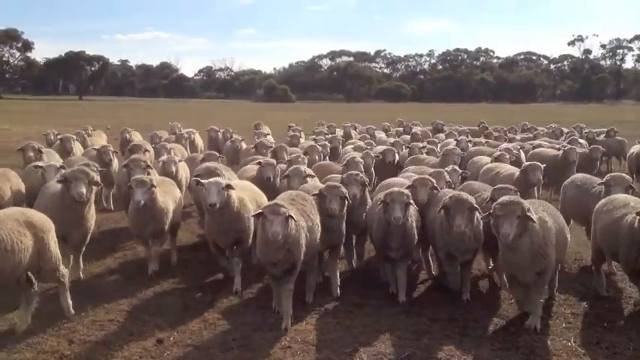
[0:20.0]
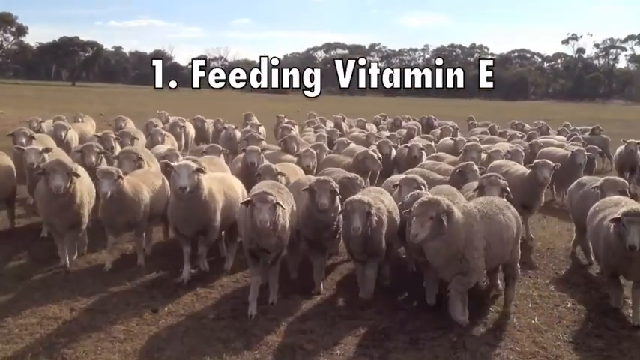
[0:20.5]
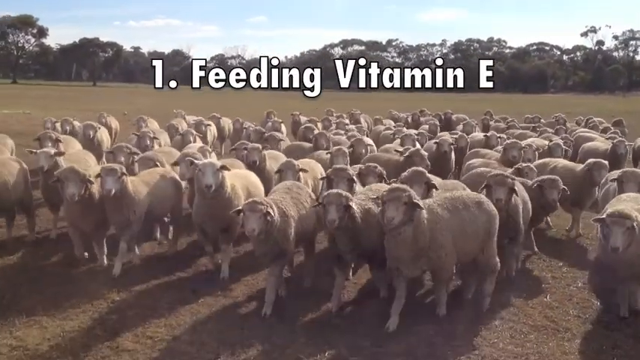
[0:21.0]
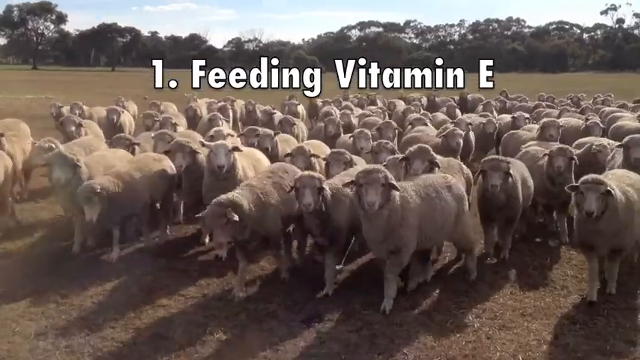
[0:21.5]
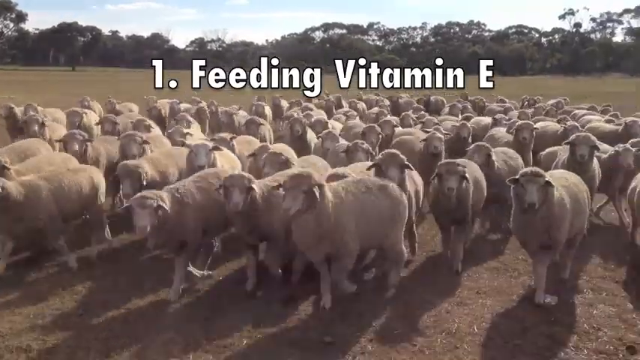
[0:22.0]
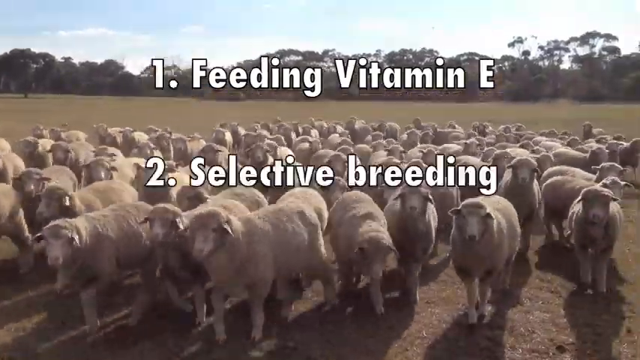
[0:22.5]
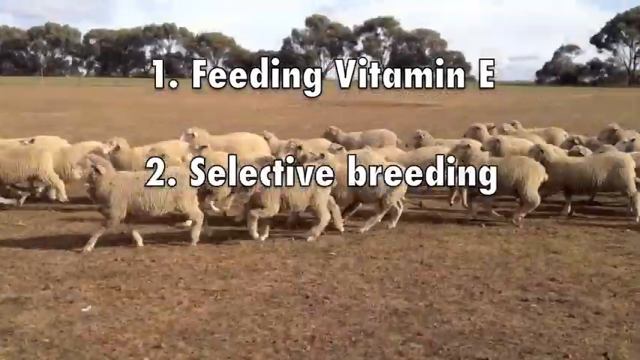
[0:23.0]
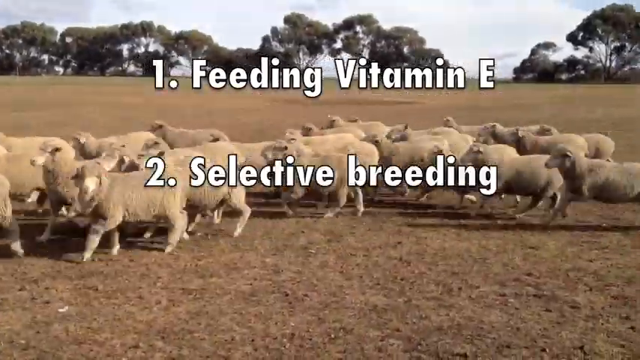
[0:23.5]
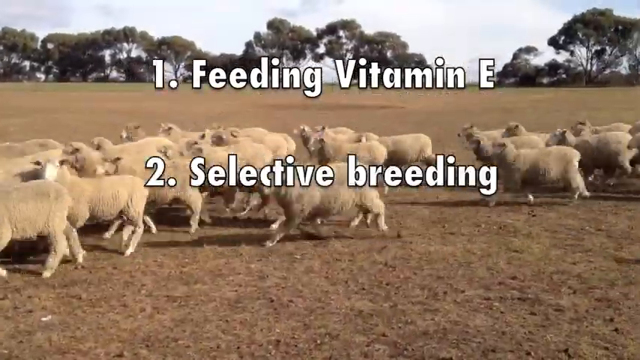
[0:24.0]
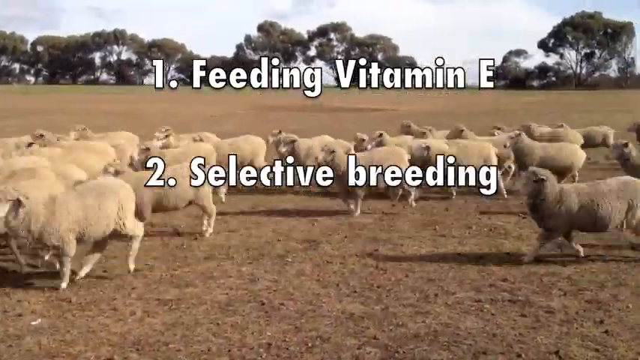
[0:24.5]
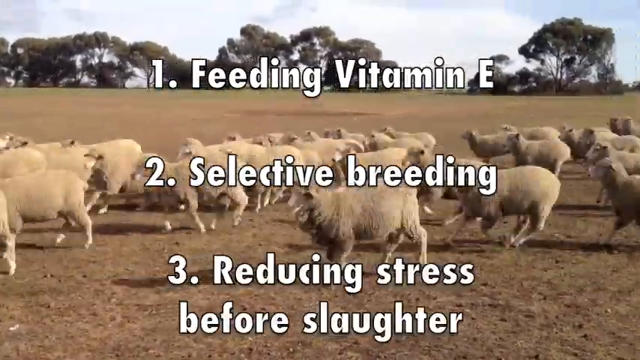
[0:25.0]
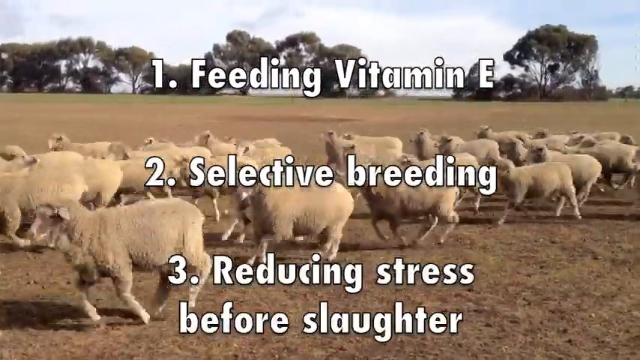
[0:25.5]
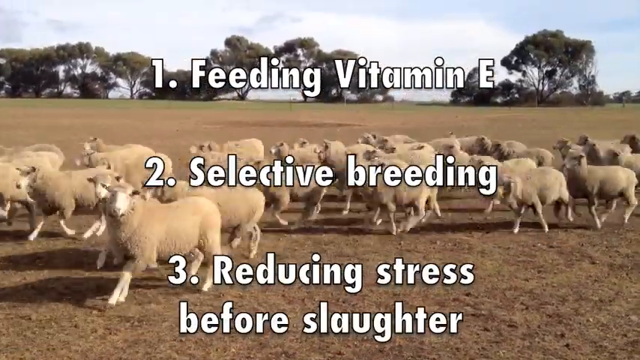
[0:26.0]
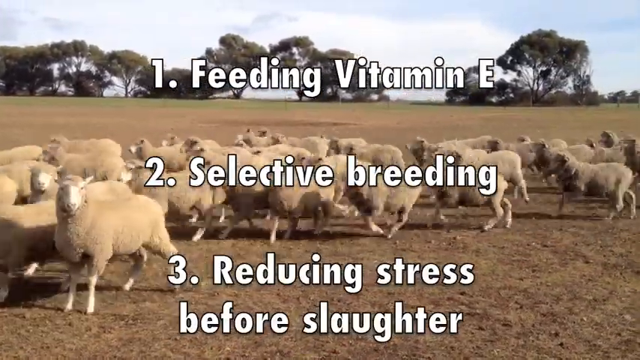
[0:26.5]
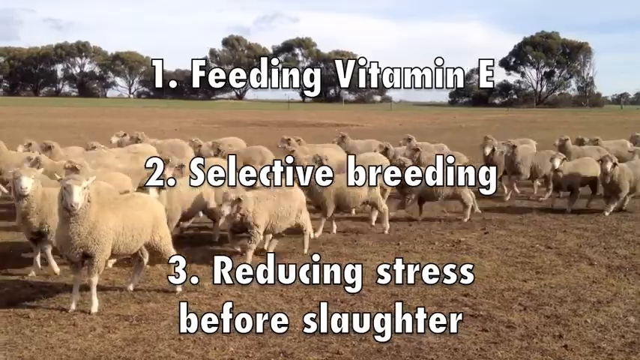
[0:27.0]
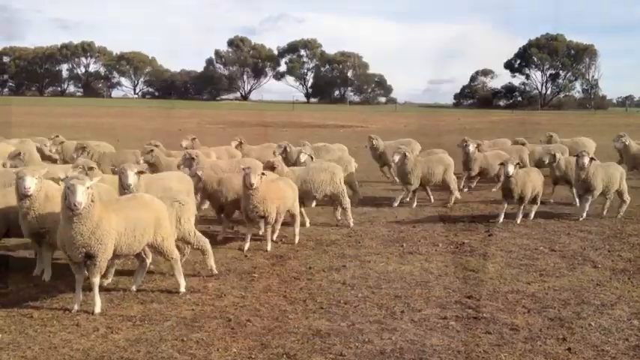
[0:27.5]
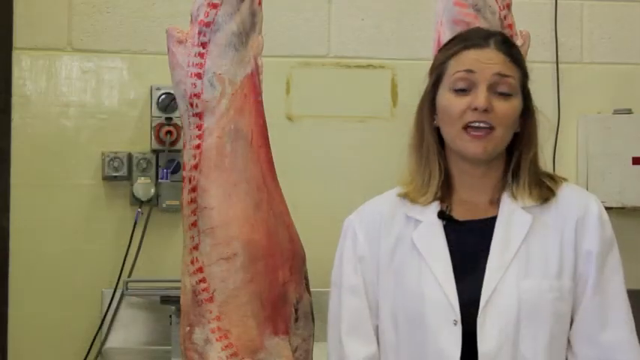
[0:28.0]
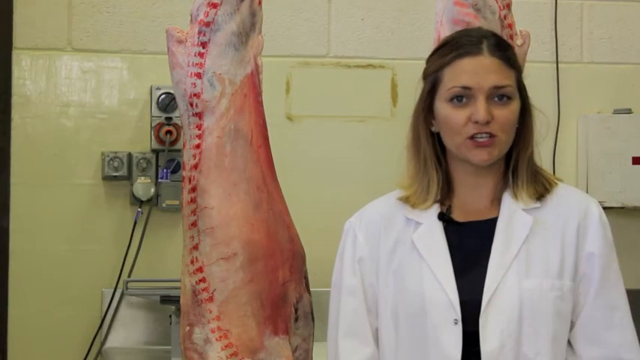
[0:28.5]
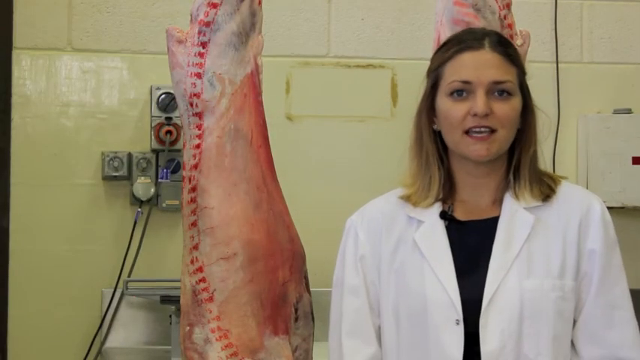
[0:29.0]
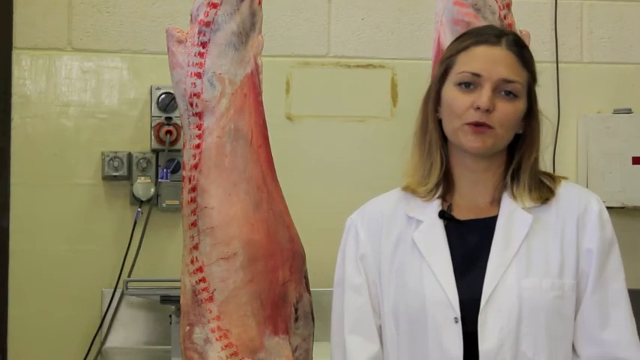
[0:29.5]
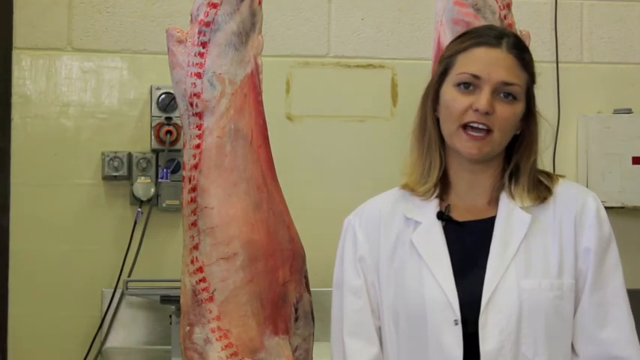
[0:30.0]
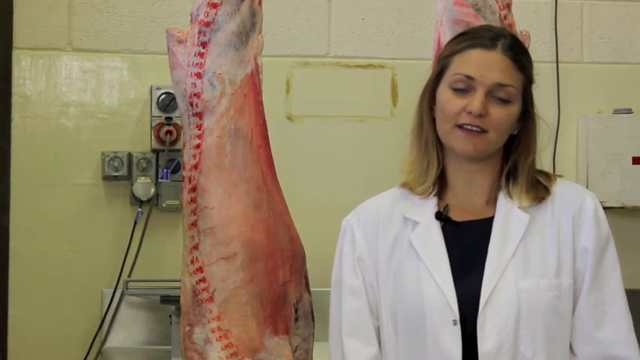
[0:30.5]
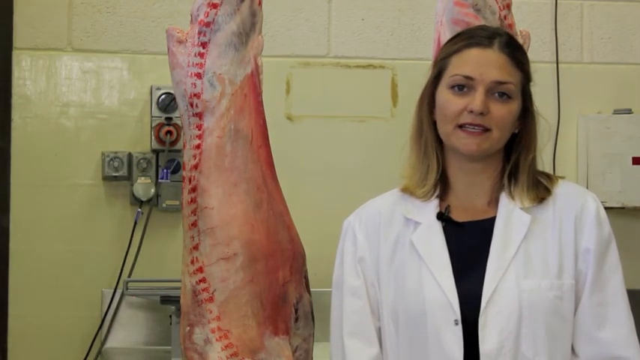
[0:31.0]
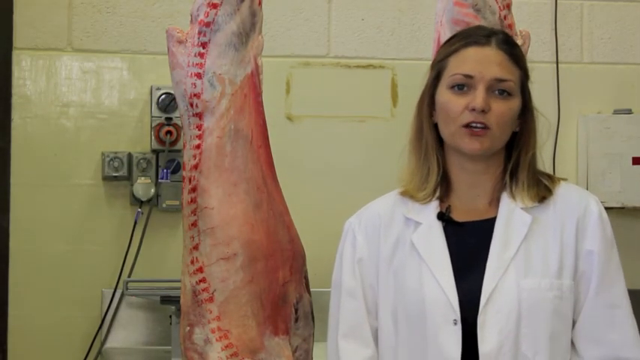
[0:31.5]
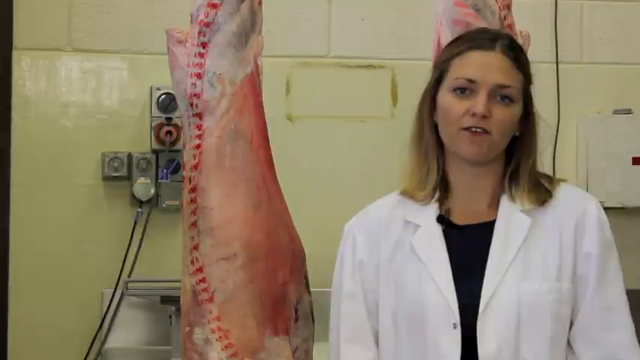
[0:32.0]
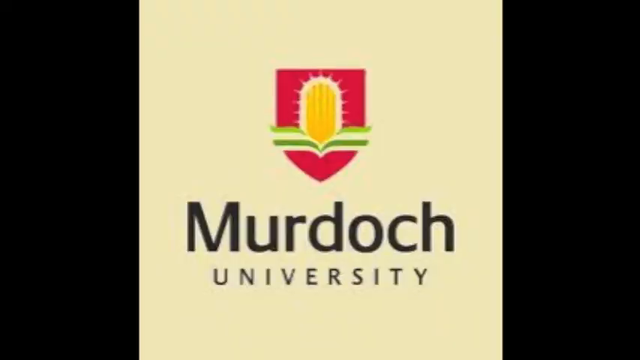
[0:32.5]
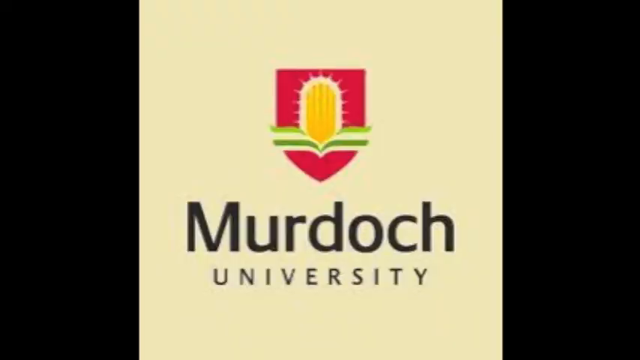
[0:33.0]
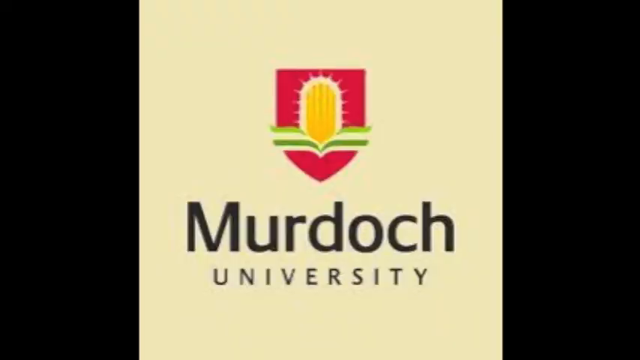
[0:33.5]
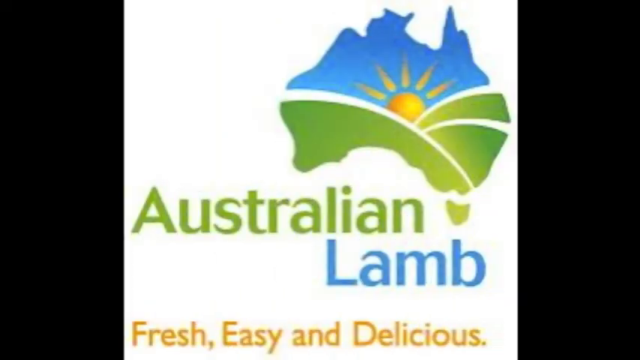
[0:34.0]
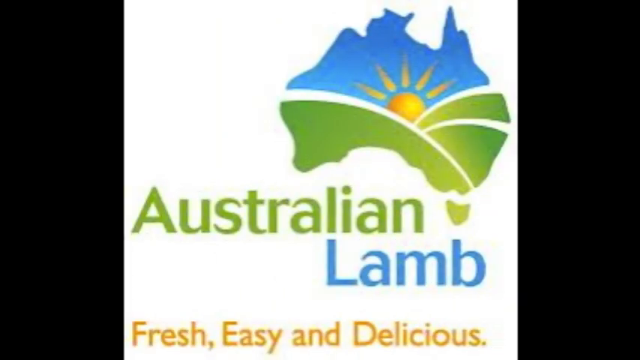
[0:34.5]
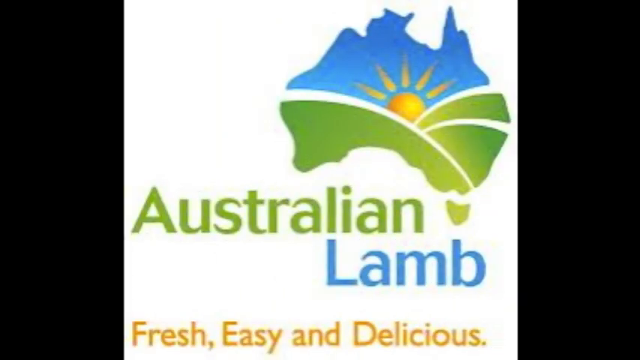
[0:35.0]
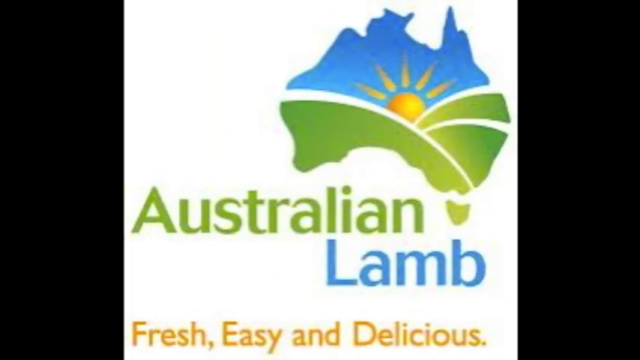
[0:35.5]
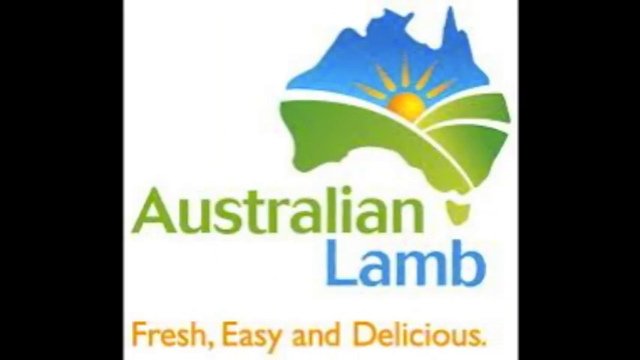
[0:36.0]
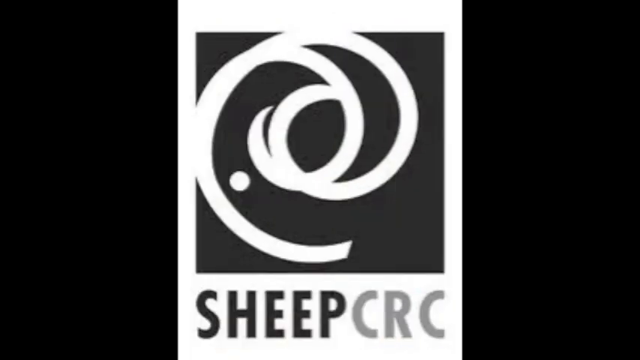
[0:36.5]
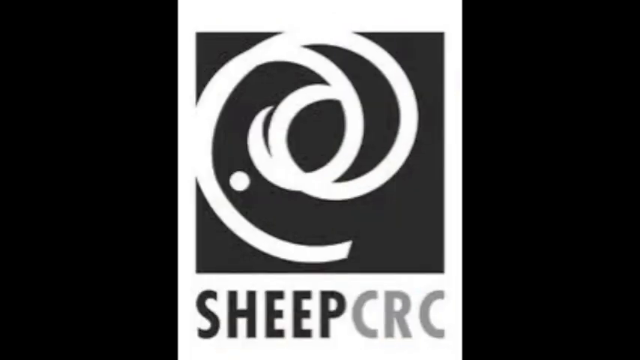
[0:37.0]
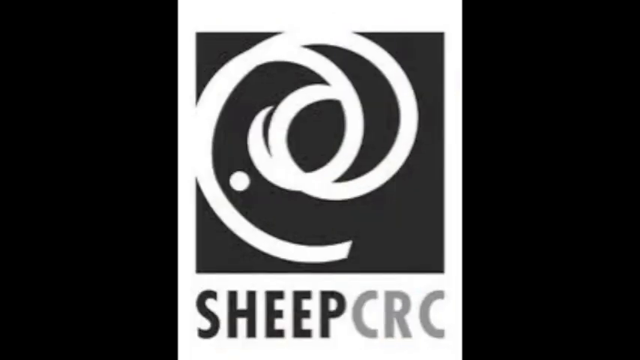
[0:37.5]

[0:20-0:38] What appears to be information for farmers raising lambs is shown: a listing of steps to take before slaughtering lambs. Number one reads "feeding vitamin E", step two is selective breeding, and three is reducing stress before slaughter. A close-up follows of the woman talking, and then the logo of Murdoch University appears, apparently the university she is affiliated with. The logo looks like an ear of corn with some rows, in green, along with a downward-facing rose-colored arrow.